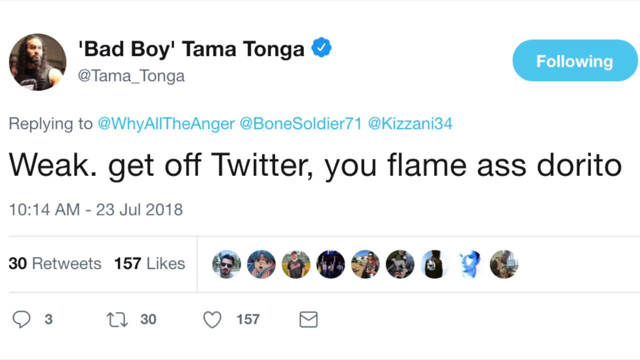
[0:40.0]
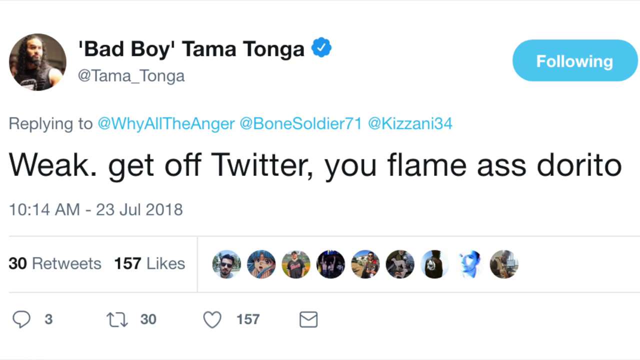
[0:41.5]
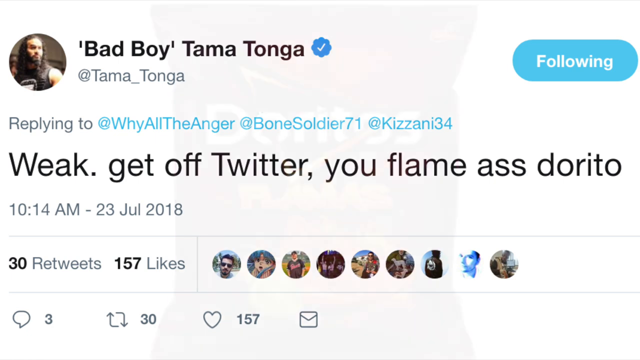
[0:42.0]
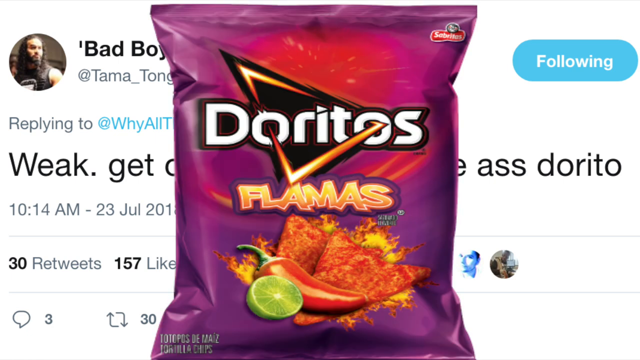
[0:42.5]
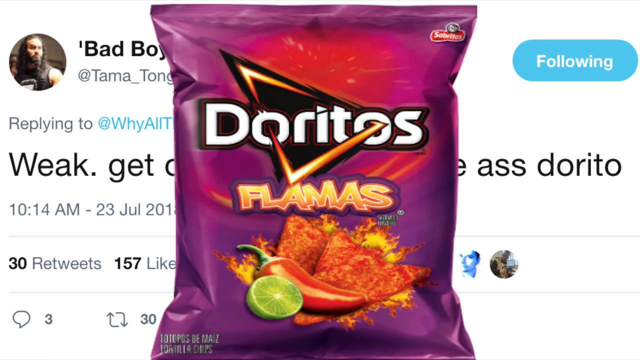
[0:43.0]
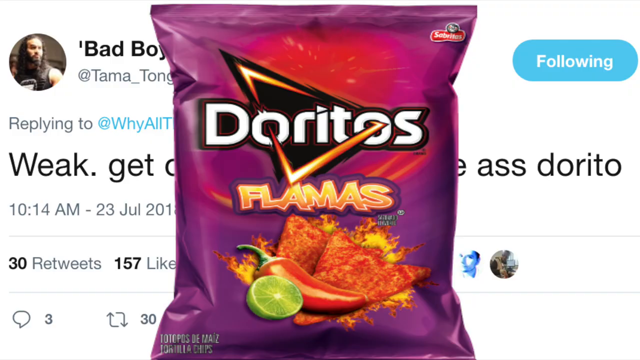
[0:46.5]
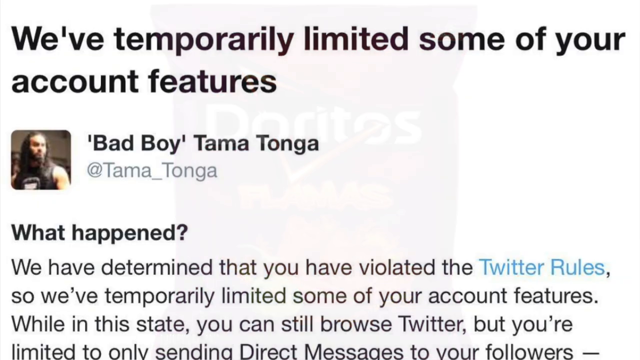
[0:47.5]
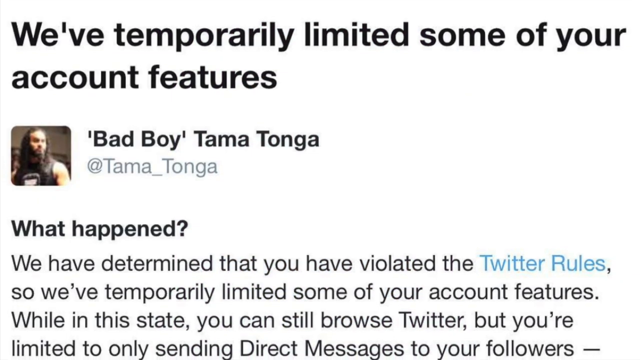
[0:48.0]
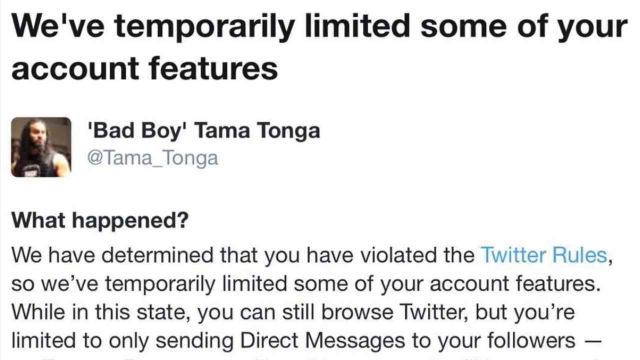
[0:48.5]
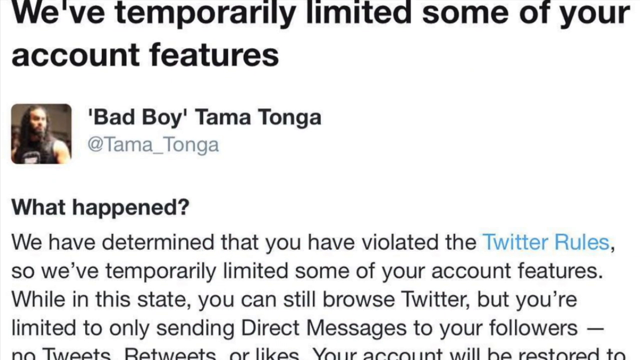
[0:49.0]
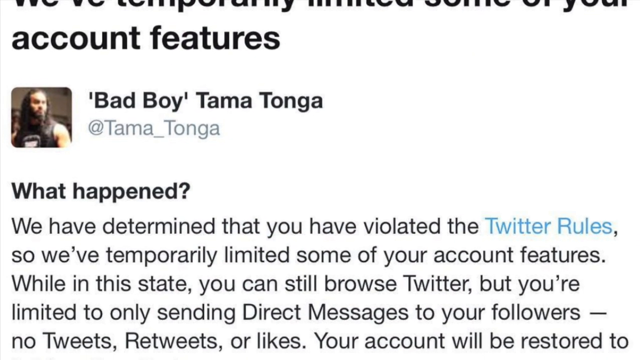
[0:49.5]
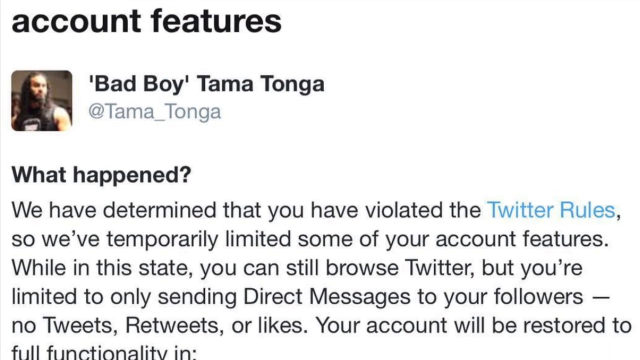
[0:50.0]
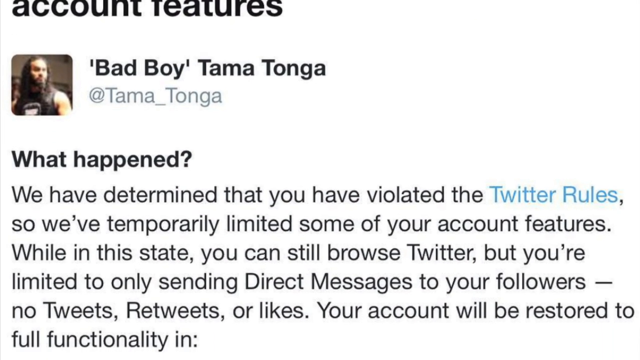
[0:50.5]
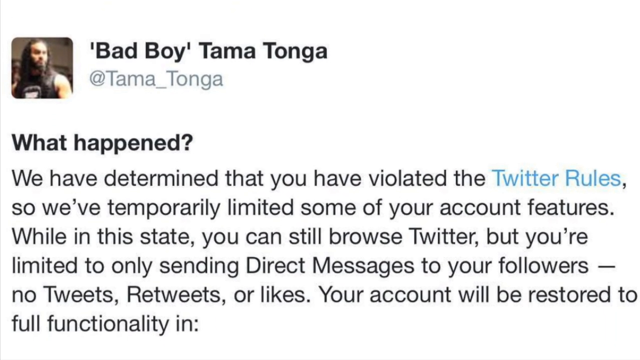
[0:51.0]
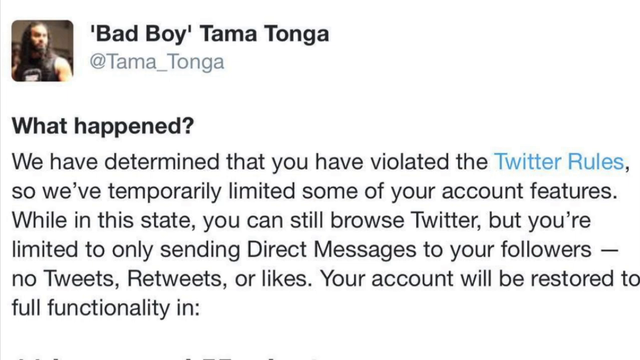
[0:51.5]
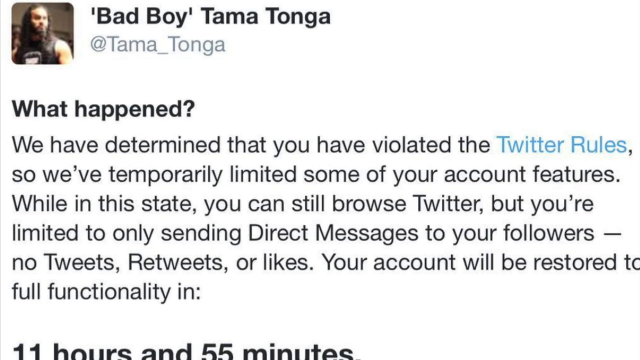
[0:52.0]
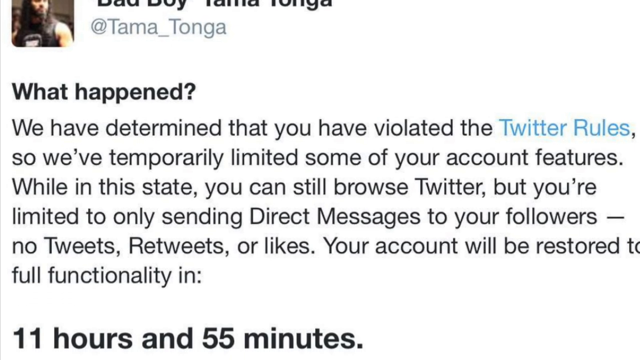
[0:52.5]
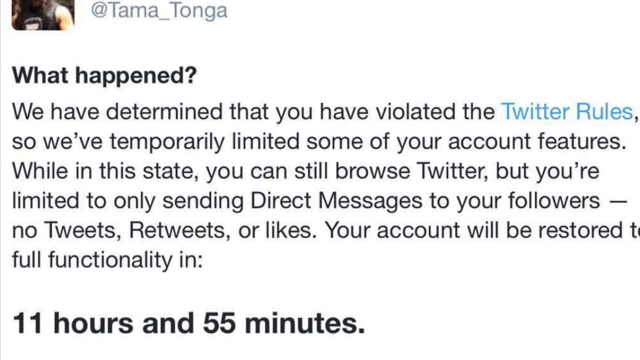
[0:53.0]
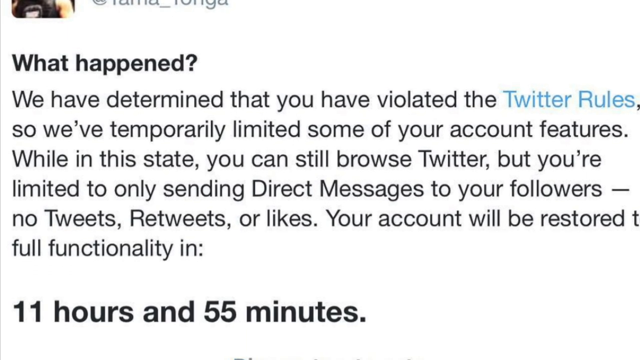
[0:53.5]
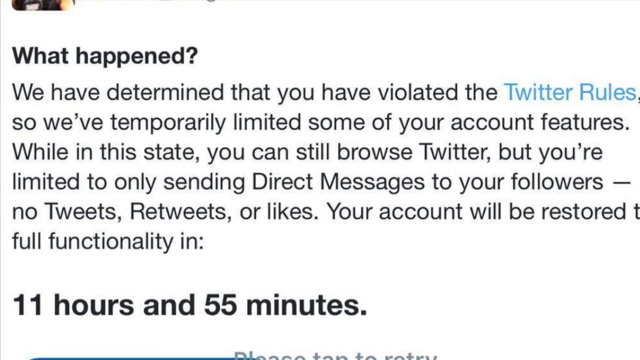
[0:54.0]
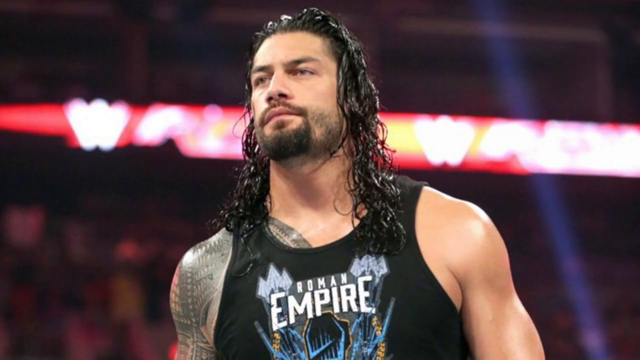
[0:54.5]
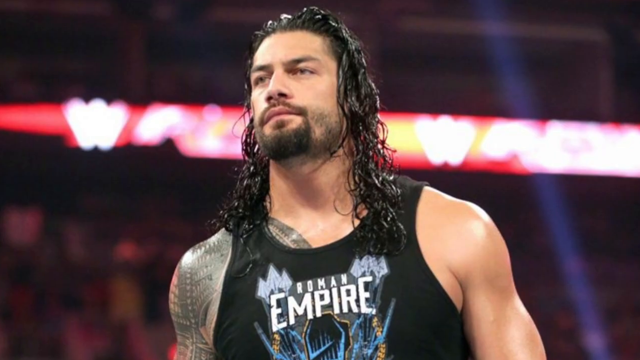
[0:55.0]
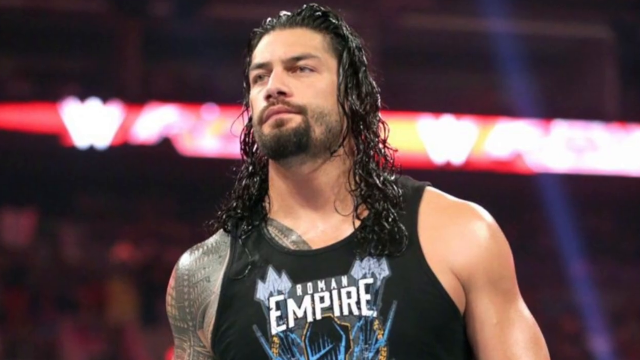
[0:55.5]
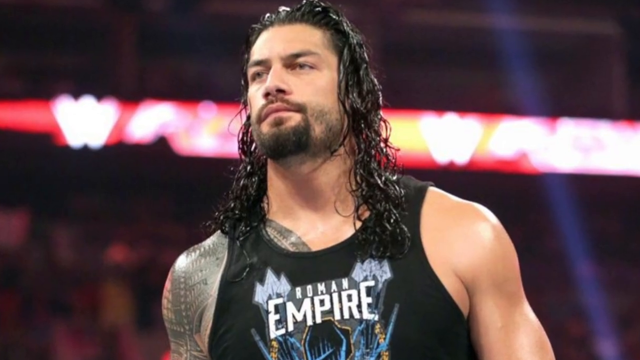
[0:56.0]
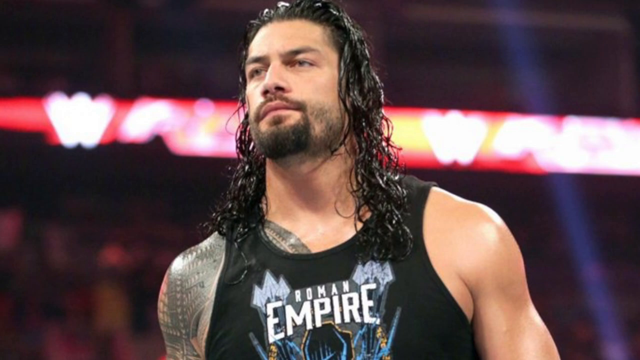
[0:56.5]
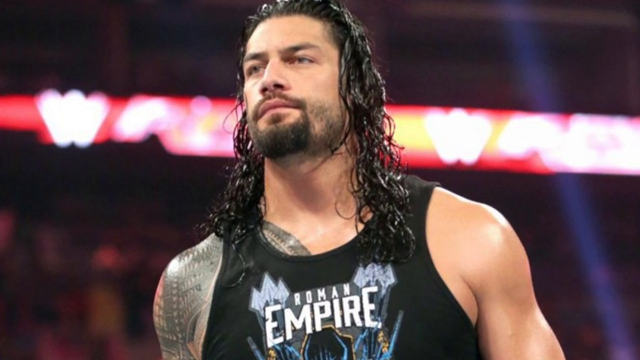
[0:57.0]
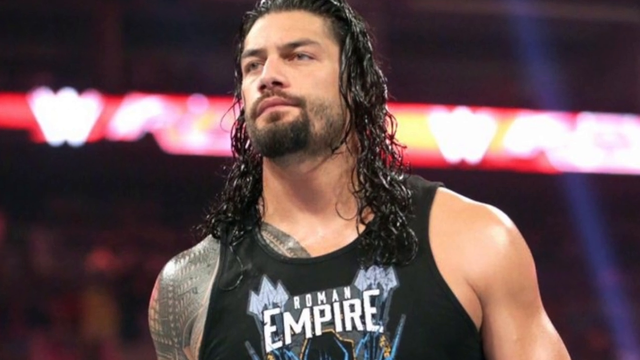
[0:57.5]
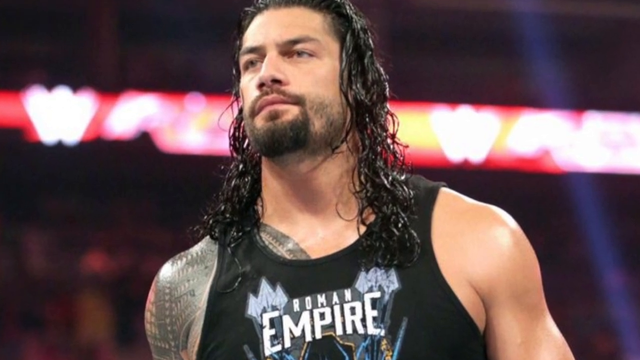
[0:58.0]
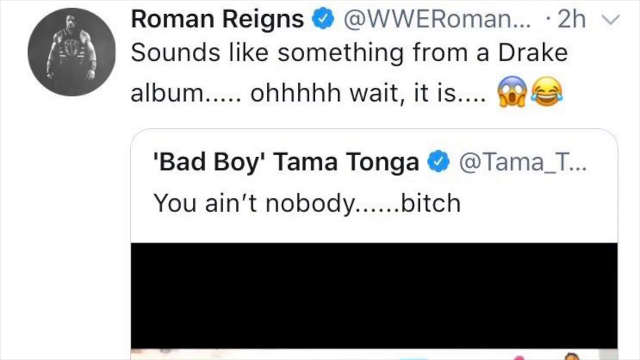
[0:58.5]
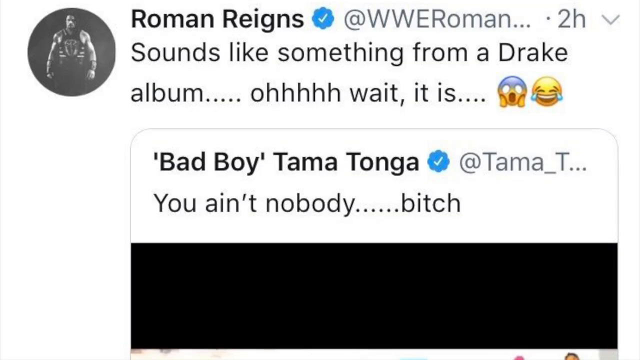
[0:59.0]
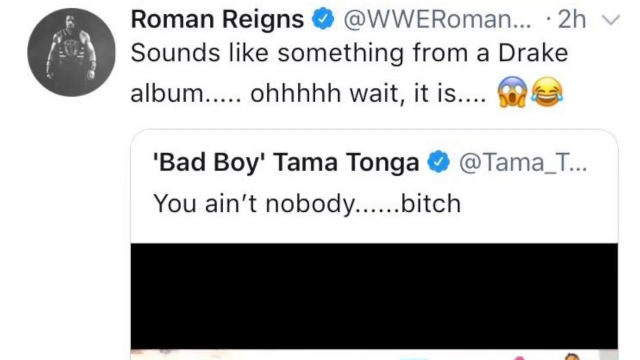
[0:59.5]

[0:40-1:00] A Twitter post from Bad Boy Tama Tonga, with a blue checkmark next to his name, says in black text "weak, get off Twitter, you flame", followed by a bad word and "Dorito". Underneath, it shows 30 retweets and 157 likes, and a whole bunch of profile pictures appear on the right side. A purple bag of Doritos that says "Doritos Flamas" comes out in the forefront; it shows two Dorito chips, a red hot jalapeño and a sliced lime. The bag disappears, and another tweet by Bad Boy Tama Tonga is shown as the camera kind of zooms in on the post and kind of scrolls down. The video then cuts to a picture of a wrestler with long curly hair and a goatee, wearing a black tank top with "Roman Empire" in gray text on the front, and with a tattoo on his right shoulder.